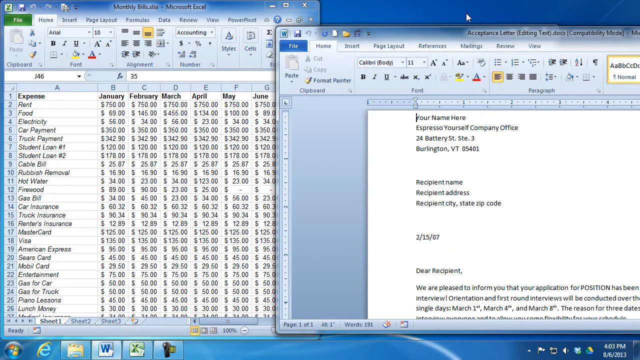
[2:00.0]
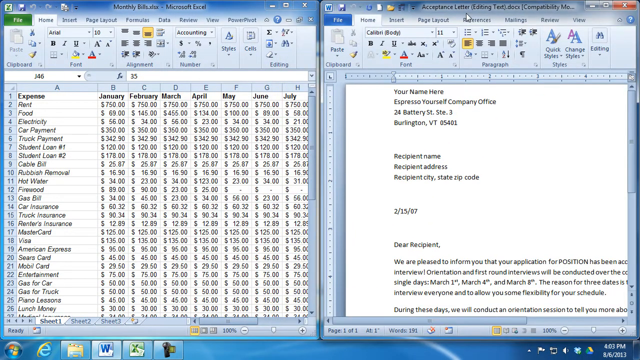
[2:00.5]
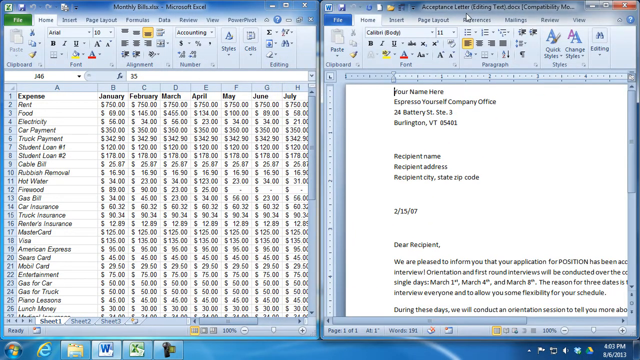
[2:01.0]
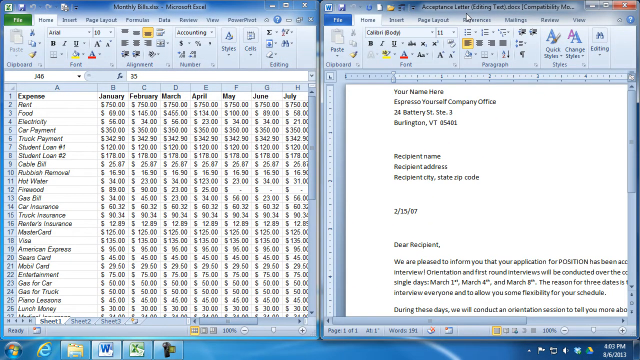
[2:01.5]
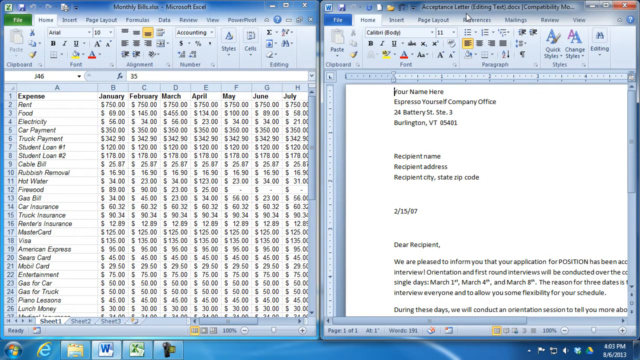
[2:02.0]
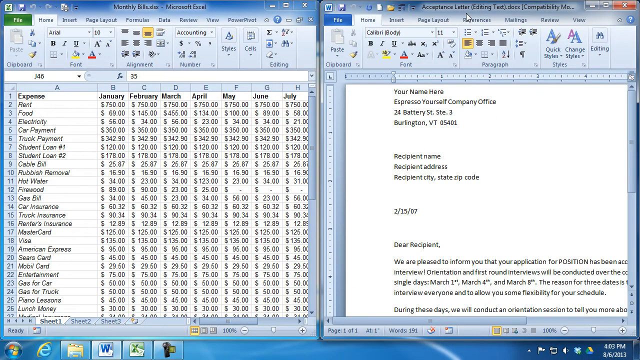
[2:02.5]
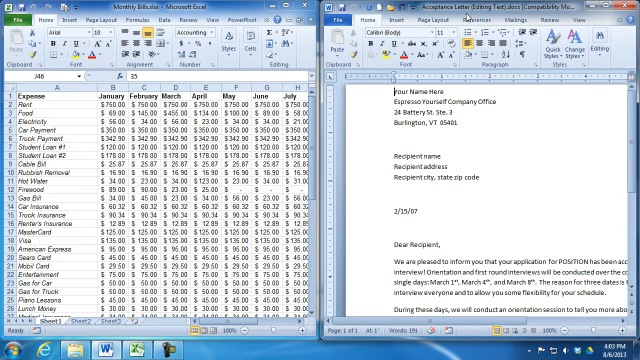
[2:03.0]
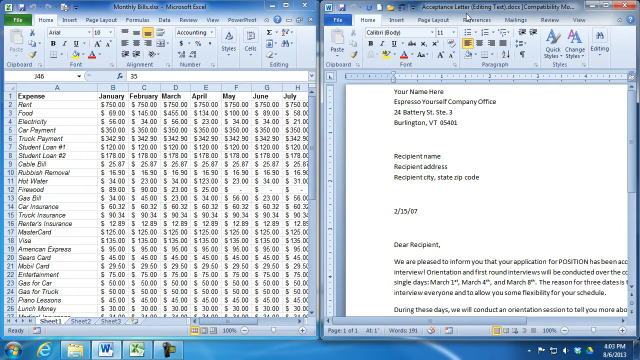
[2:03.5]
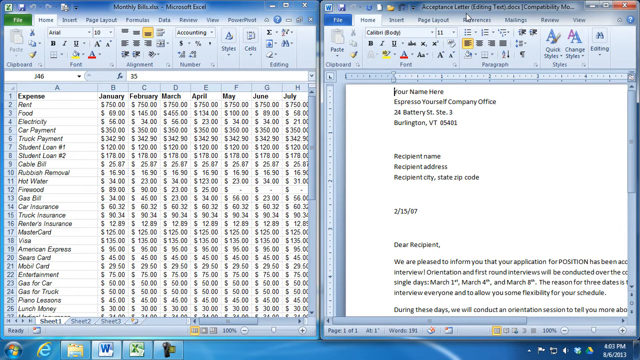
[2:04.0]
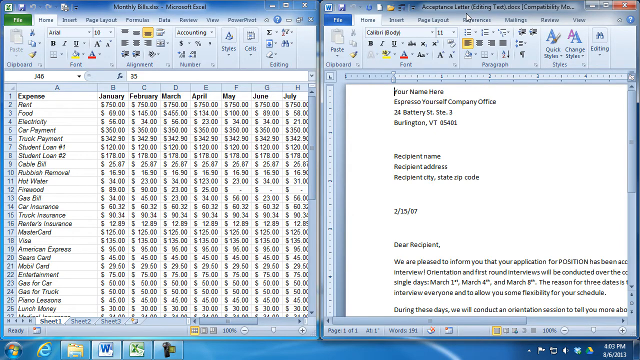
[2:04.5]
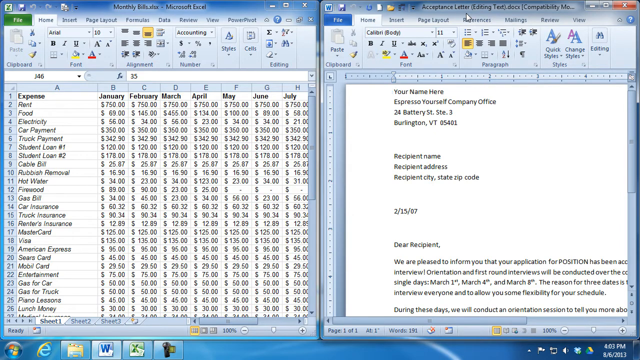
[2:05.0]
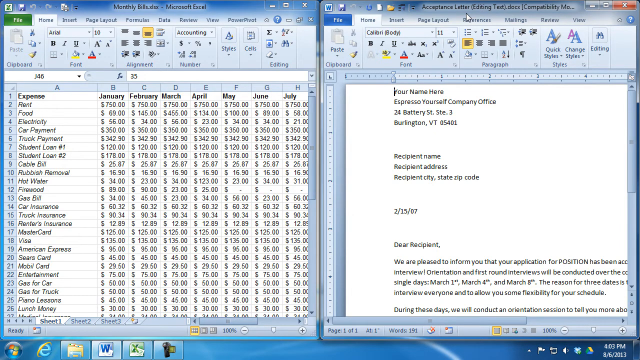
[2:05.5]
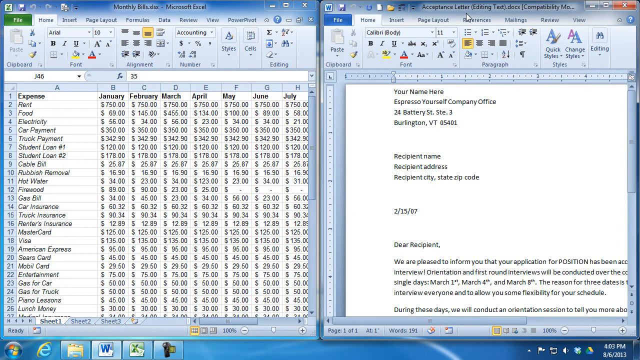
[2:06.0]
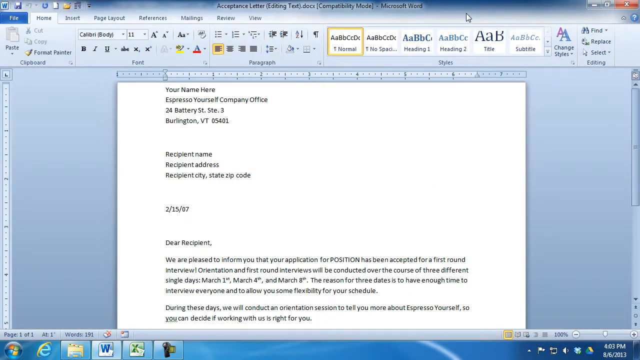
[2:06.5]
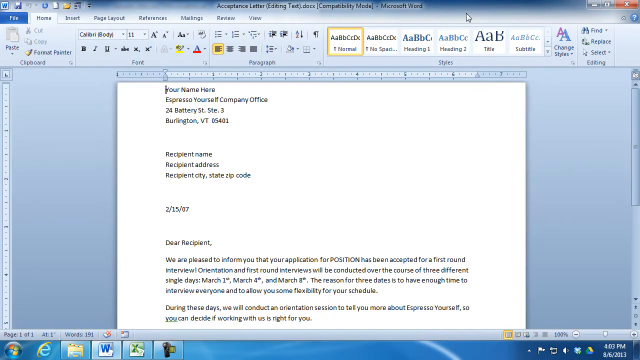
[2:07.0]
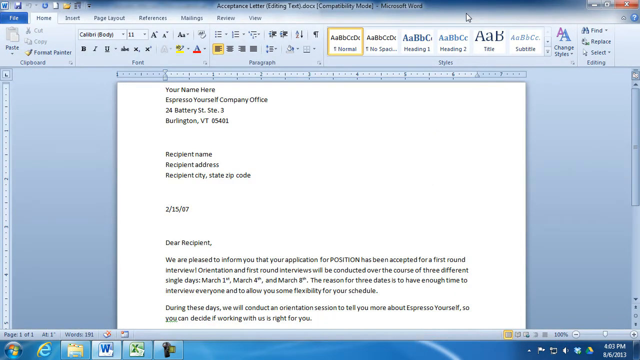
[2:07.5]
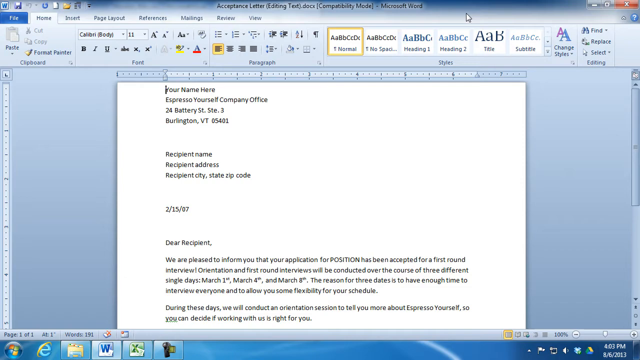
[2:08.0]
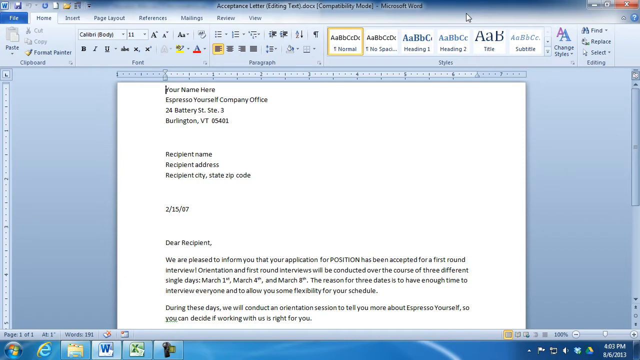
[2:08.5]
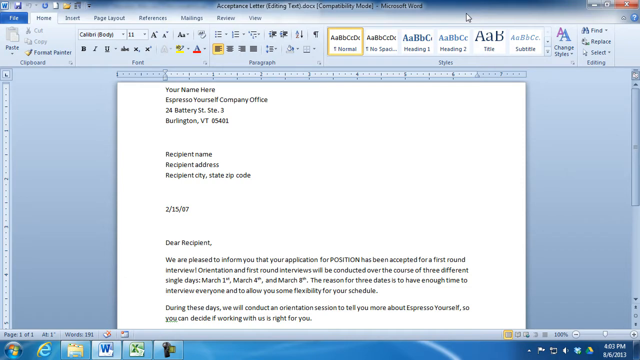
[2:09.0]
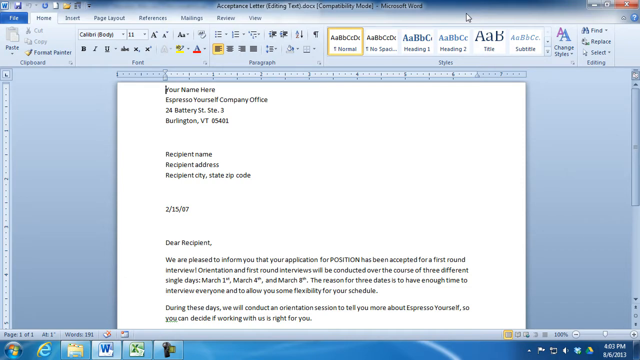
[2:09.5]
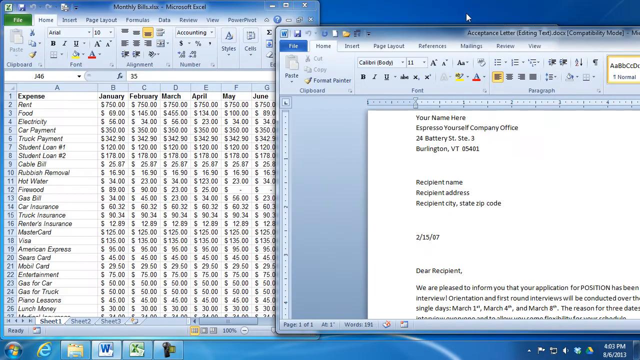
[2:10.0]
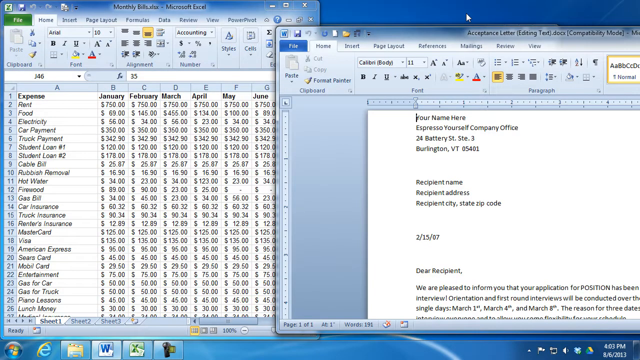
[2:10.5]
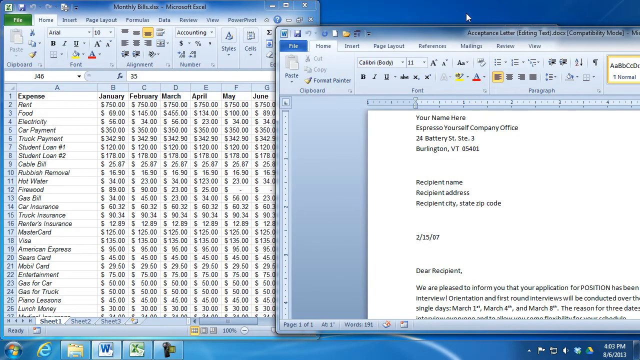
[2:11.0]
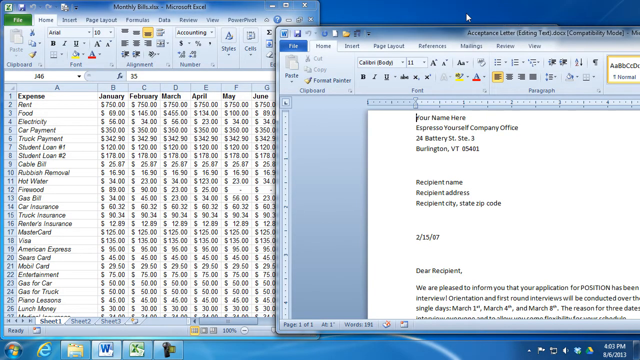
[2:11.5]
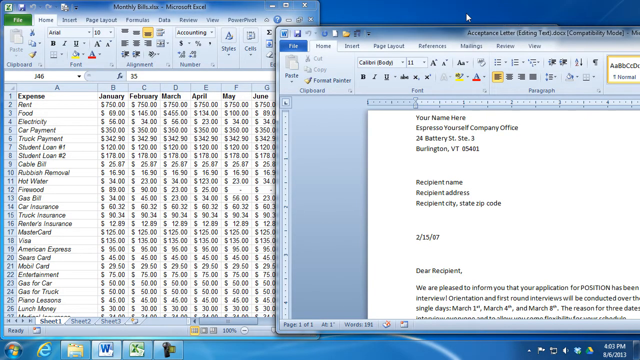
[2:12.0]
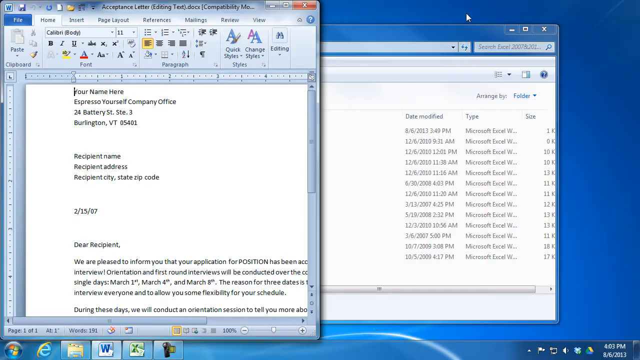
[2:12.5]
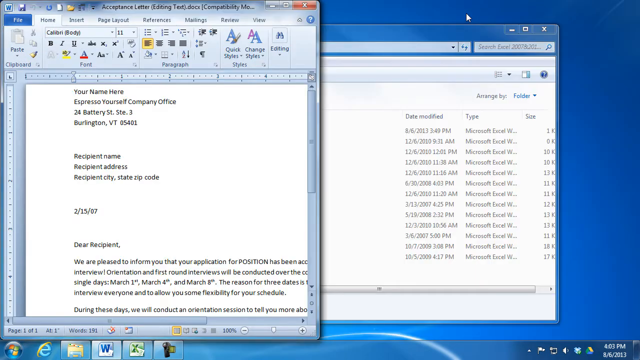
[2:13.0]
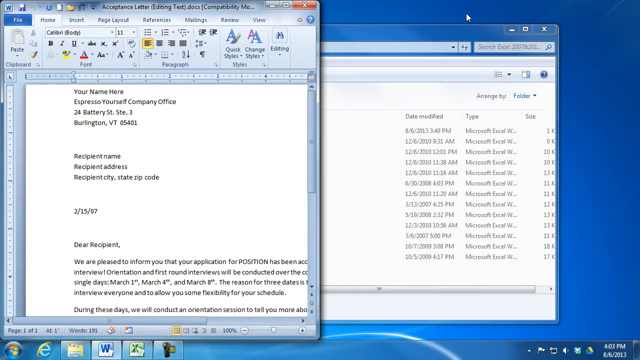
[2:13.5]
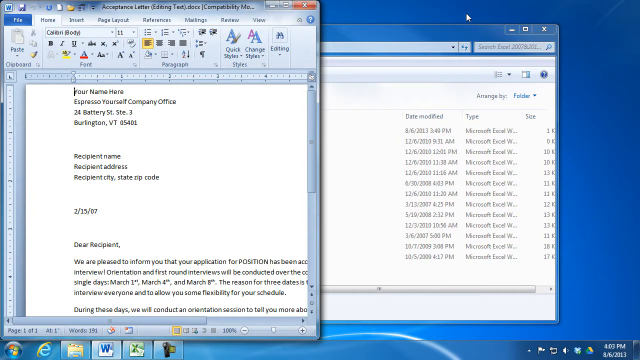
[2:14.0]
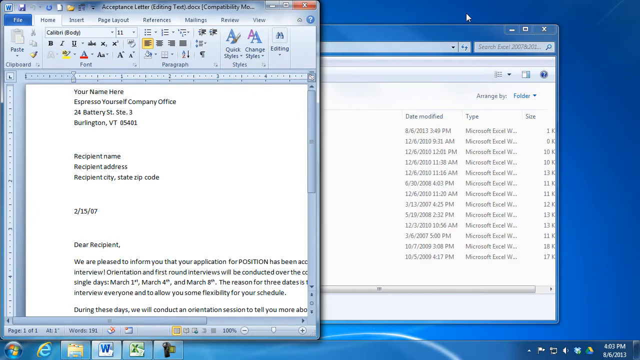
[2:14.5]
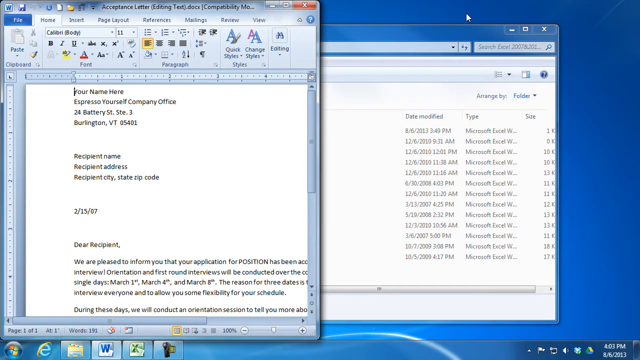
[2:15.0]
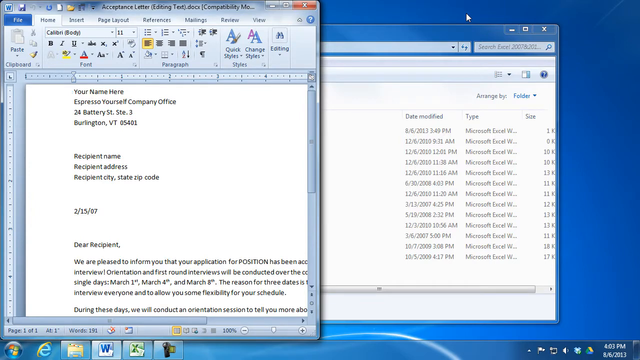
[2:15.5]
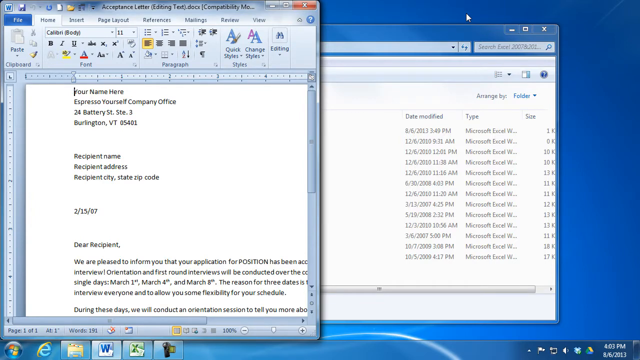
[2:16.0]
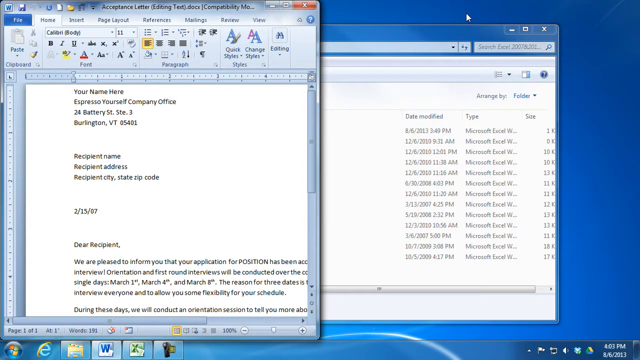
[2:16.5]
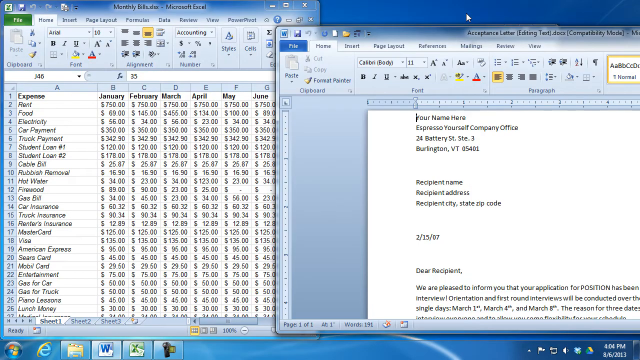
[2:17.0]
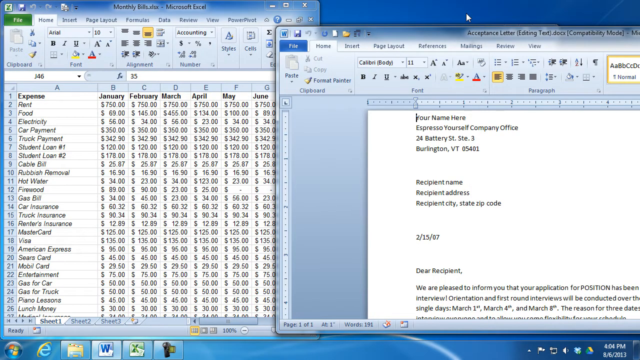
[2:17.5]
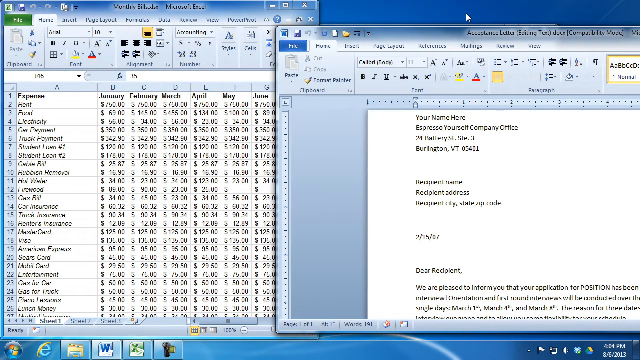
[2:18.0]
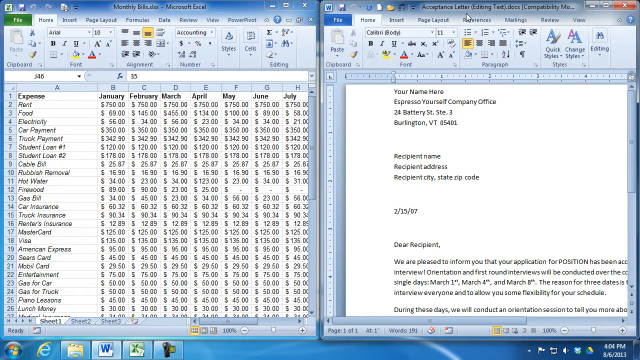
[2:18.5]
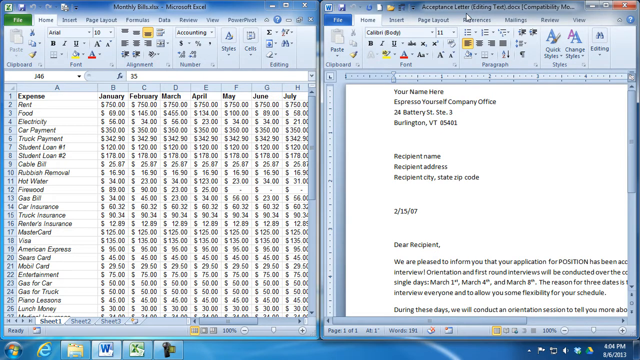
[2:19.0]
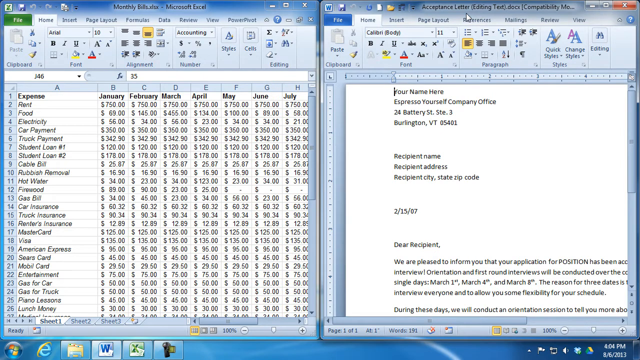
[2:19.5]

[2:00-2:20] He clicks something and the view changes to the acceptance letter, this time showing the Home tab, with the pointer over references. The text cursor is blinking. He clicks something else, and the budget is no longer in view; the acceptance letter takes up the full screen. A yellow border surrounds the style formatting box showing "AABB", with "normal" underneath. The left indent option is highlighted in yellow. The view then returns to the acceptance letter in a split-screen arrangement. Next, the acceptance letter is on the left, with file folders shown alongside. There is a date modified column showing the date accessed and the time, a type column to the right listing all Microsoft Excel files, and a column for file size. At the top right there is a search box for finding Excel files.